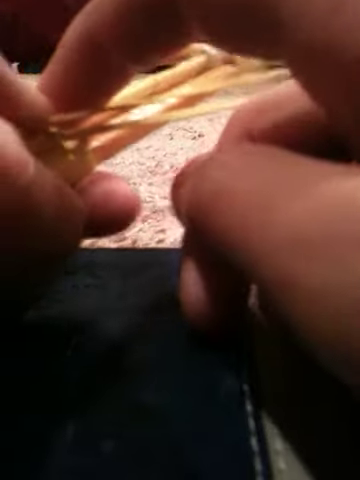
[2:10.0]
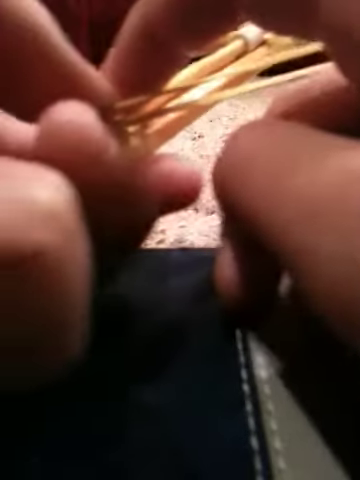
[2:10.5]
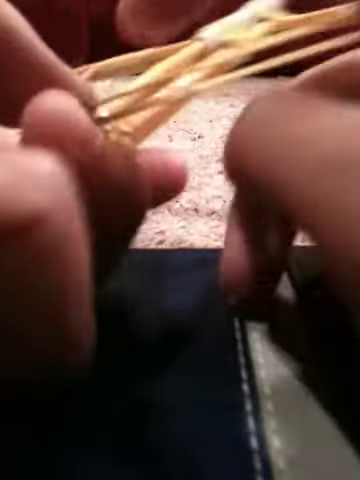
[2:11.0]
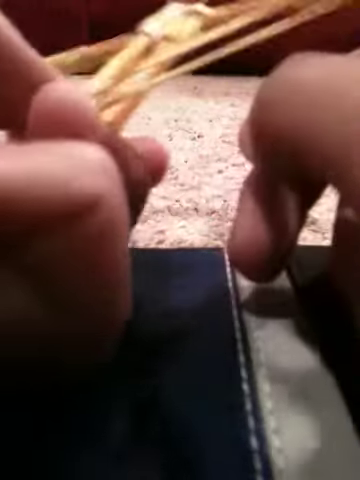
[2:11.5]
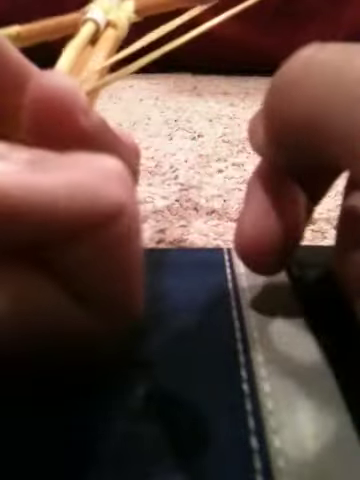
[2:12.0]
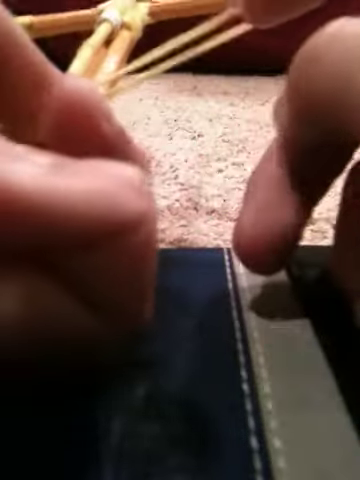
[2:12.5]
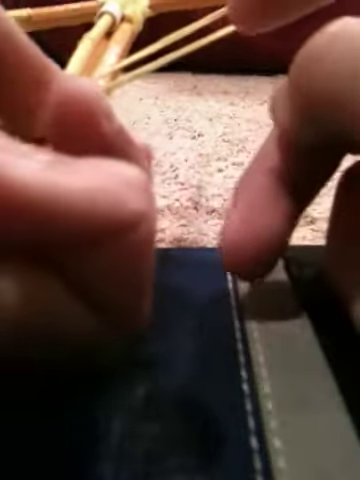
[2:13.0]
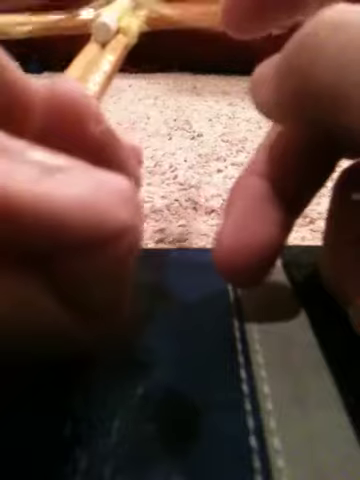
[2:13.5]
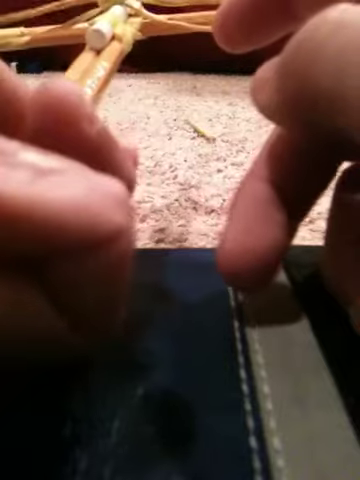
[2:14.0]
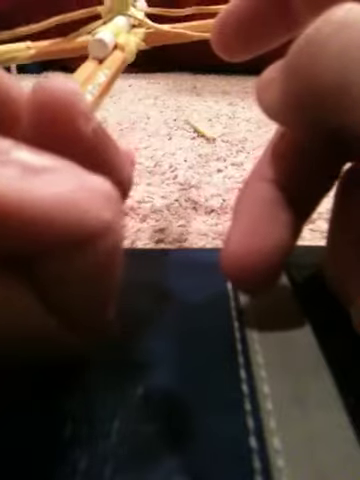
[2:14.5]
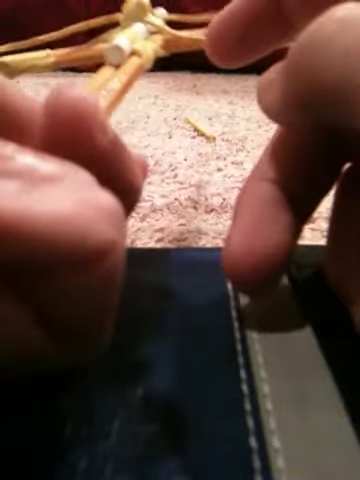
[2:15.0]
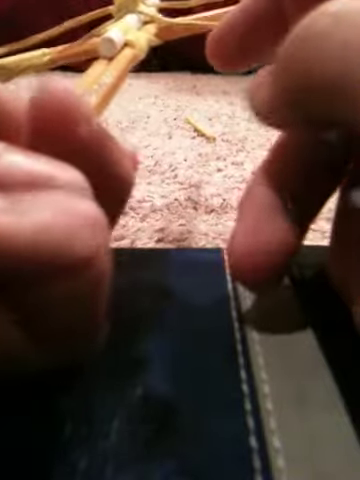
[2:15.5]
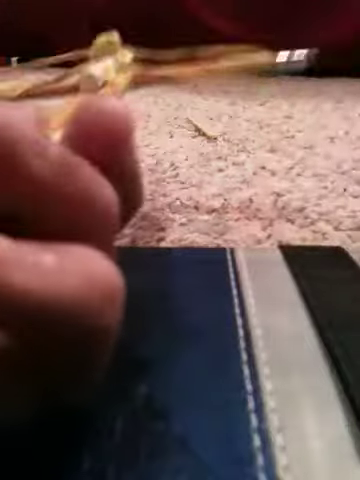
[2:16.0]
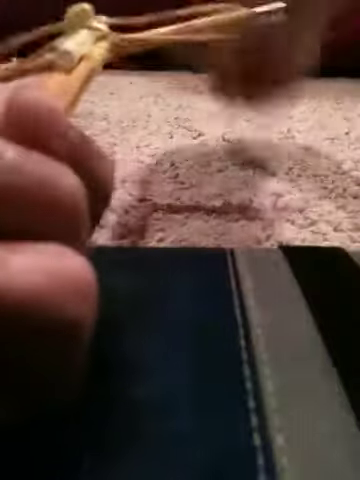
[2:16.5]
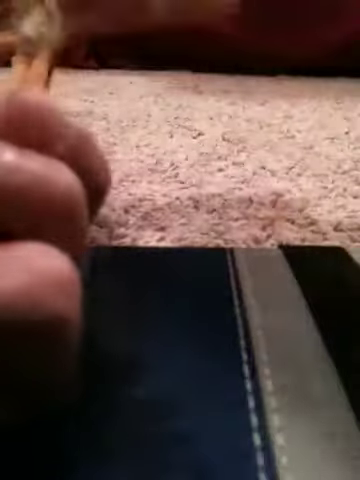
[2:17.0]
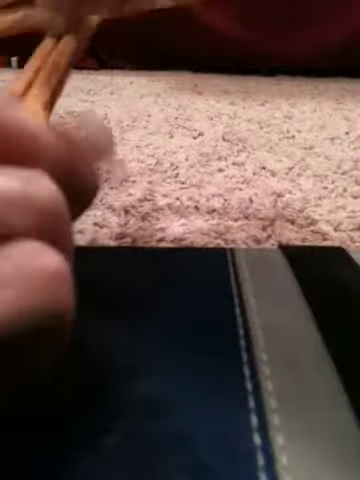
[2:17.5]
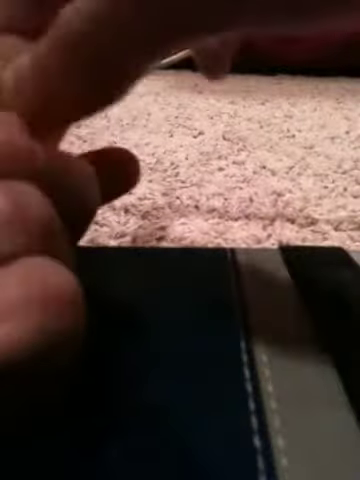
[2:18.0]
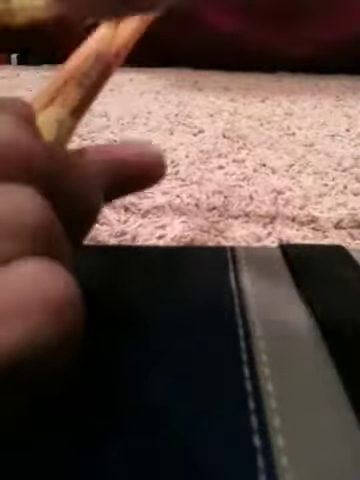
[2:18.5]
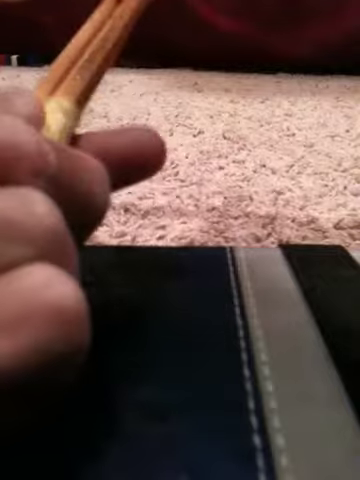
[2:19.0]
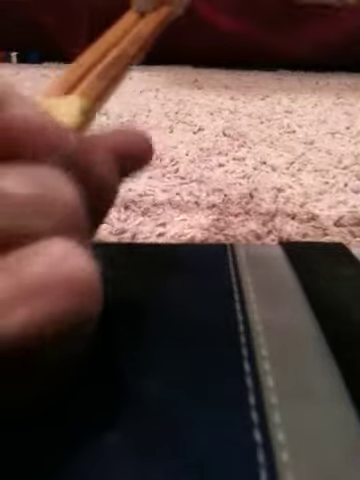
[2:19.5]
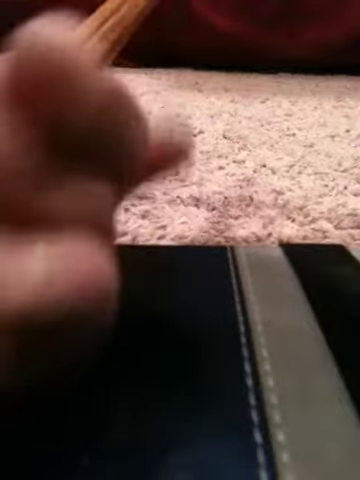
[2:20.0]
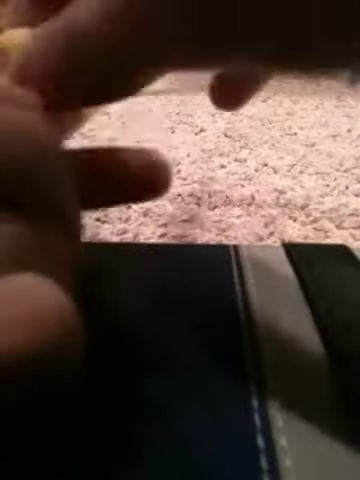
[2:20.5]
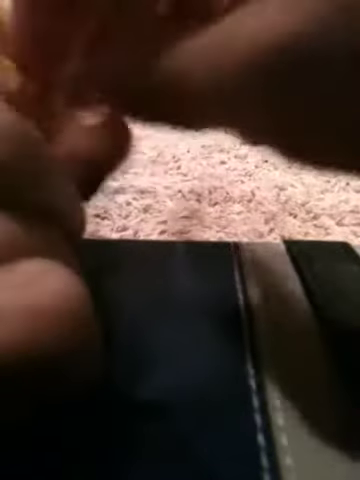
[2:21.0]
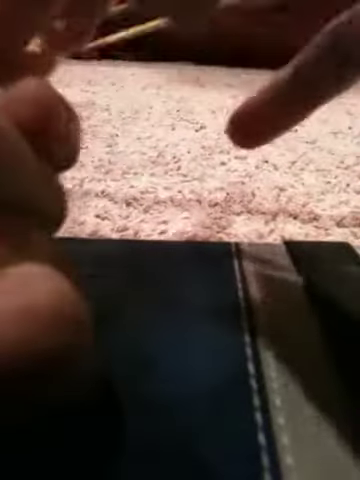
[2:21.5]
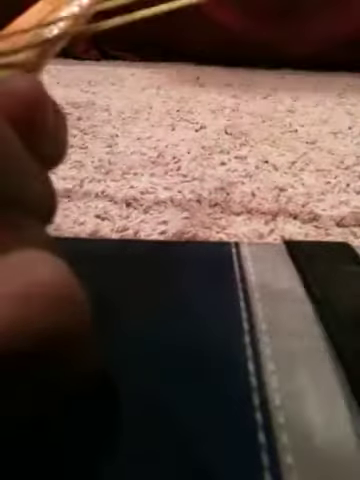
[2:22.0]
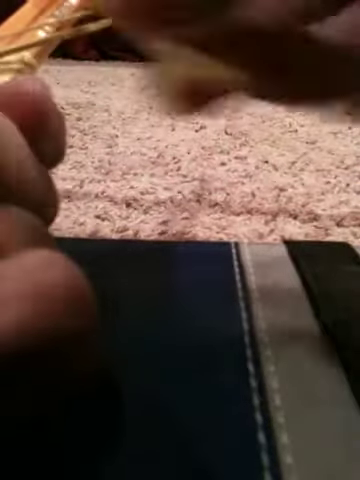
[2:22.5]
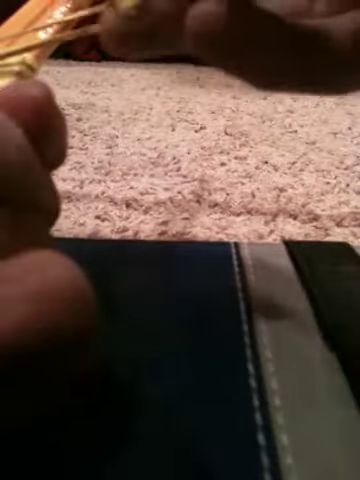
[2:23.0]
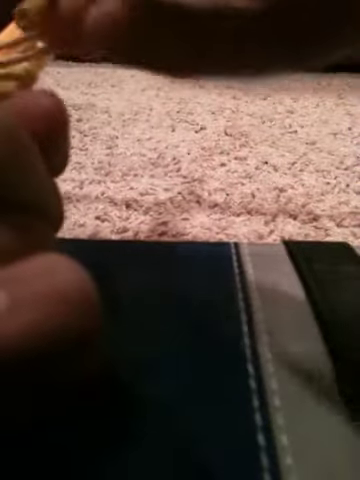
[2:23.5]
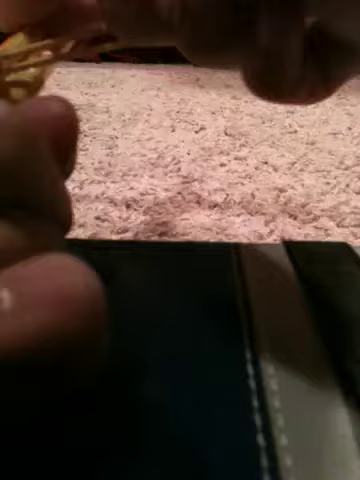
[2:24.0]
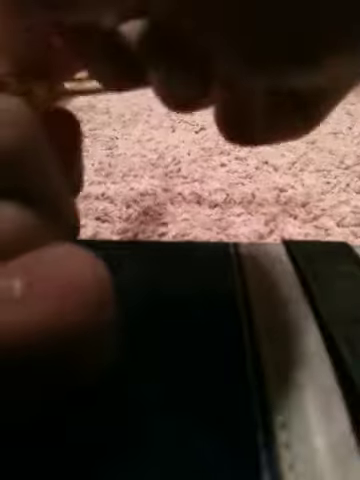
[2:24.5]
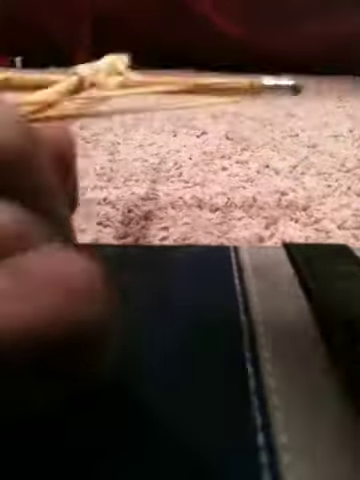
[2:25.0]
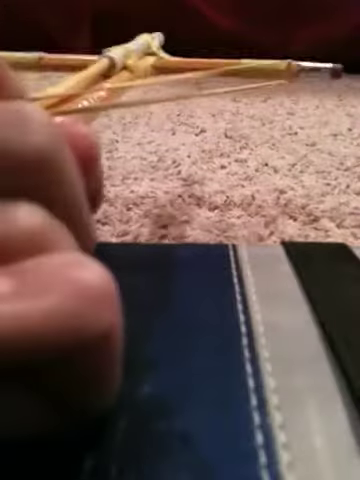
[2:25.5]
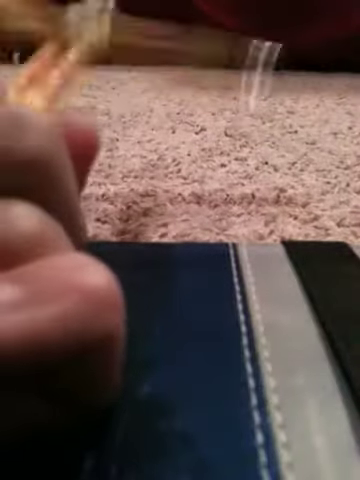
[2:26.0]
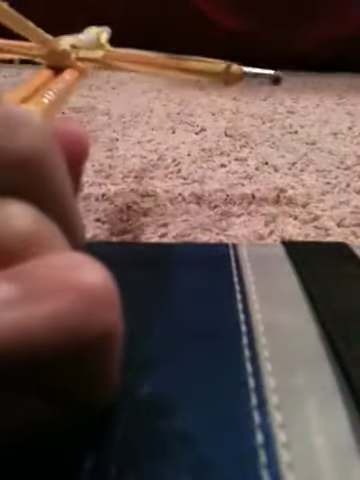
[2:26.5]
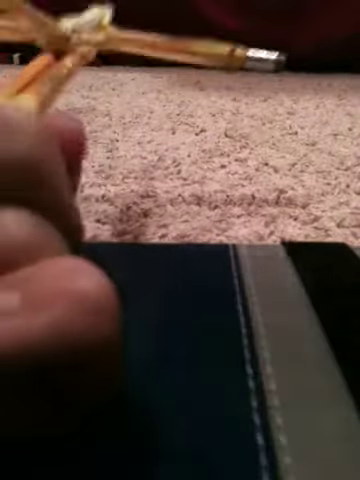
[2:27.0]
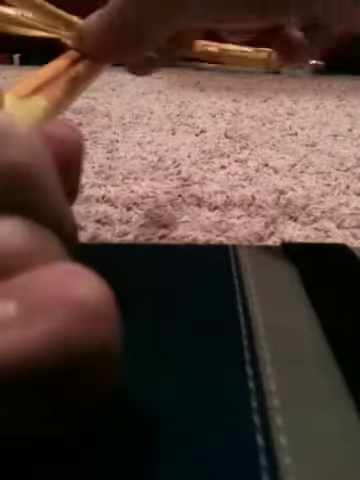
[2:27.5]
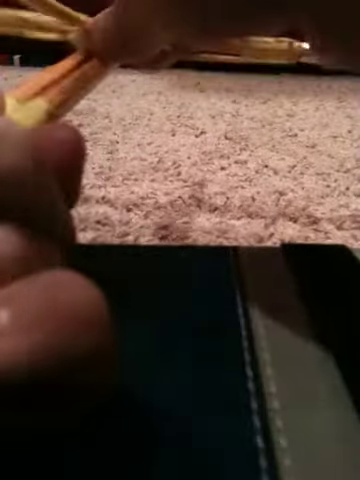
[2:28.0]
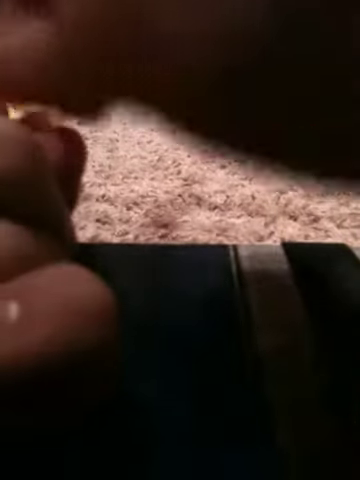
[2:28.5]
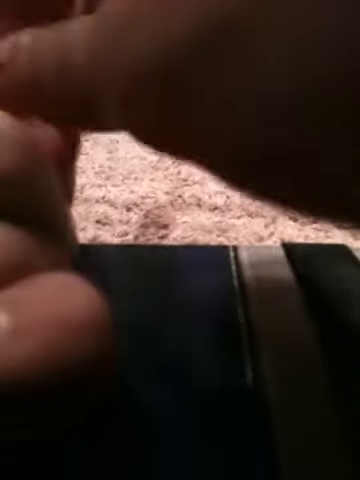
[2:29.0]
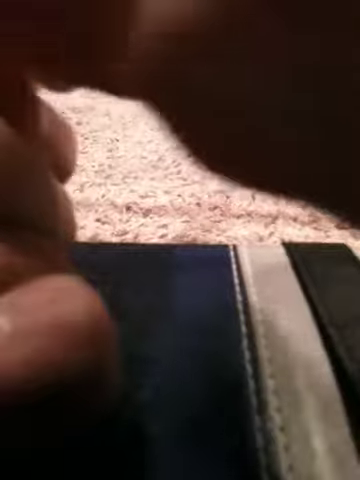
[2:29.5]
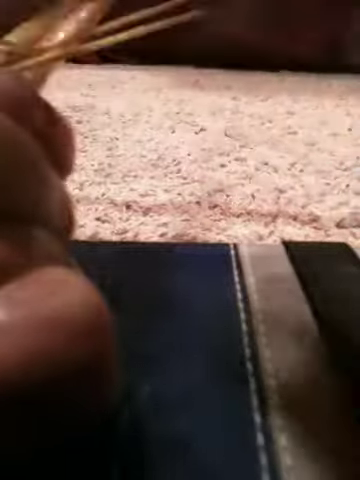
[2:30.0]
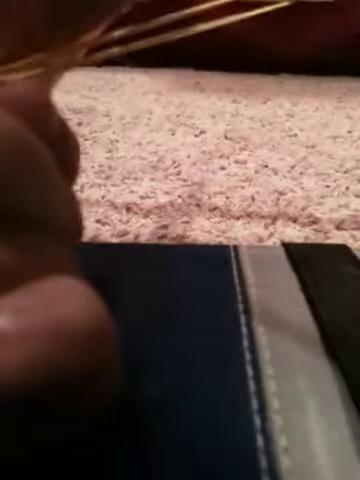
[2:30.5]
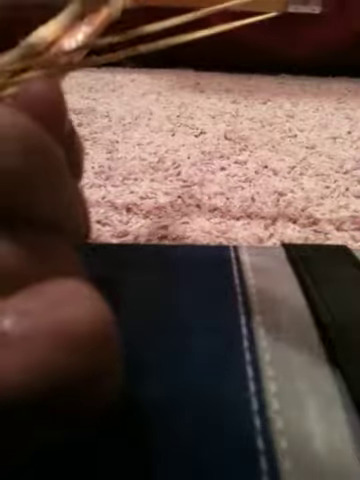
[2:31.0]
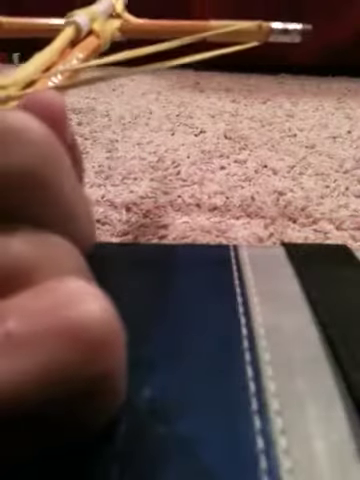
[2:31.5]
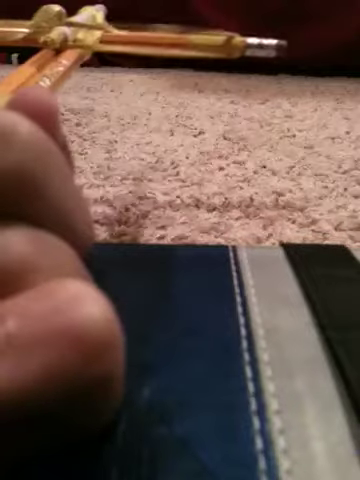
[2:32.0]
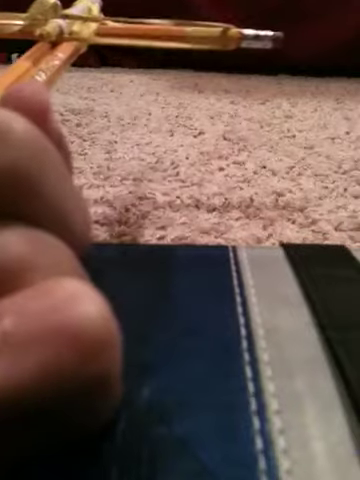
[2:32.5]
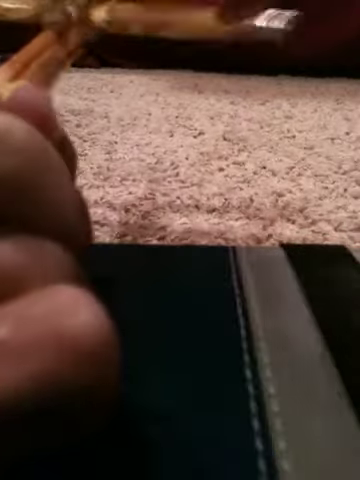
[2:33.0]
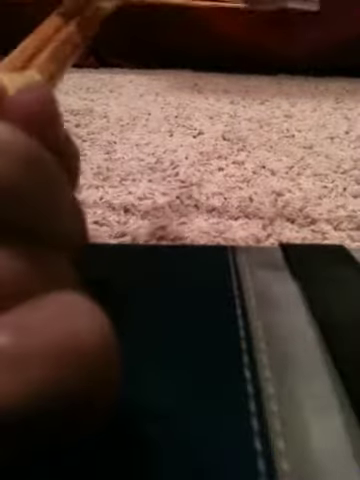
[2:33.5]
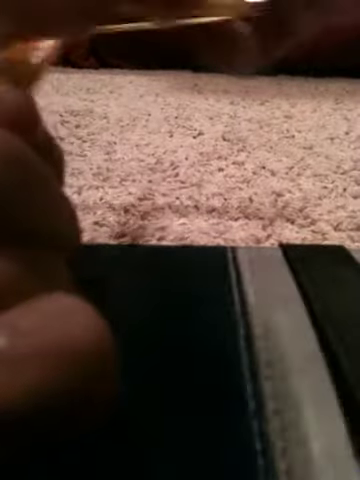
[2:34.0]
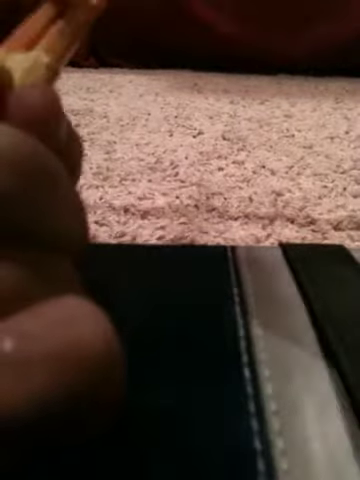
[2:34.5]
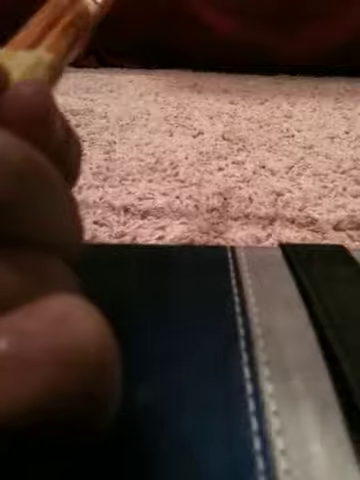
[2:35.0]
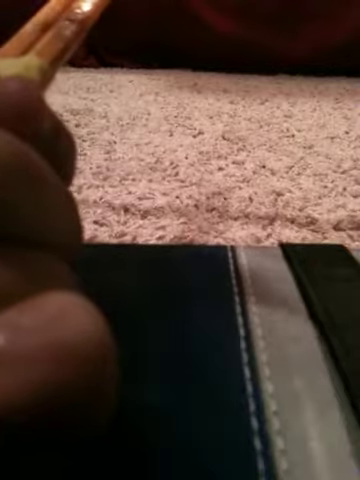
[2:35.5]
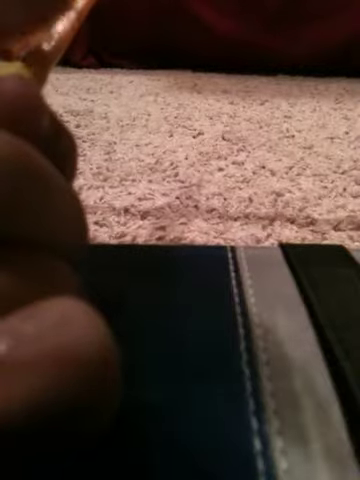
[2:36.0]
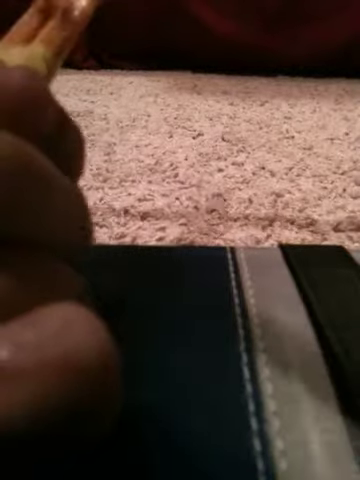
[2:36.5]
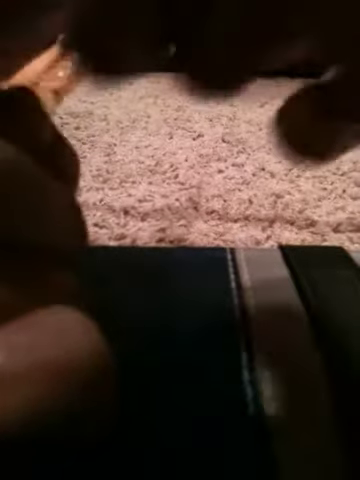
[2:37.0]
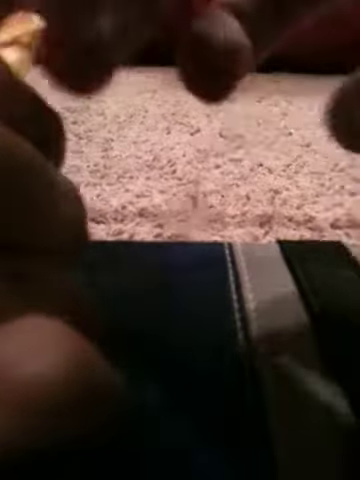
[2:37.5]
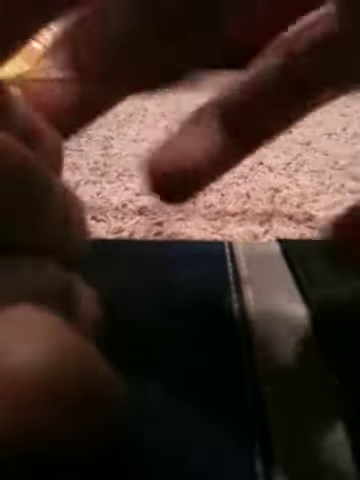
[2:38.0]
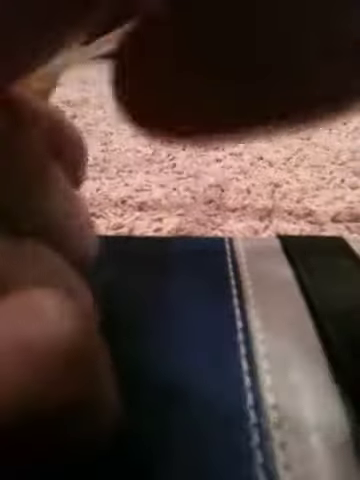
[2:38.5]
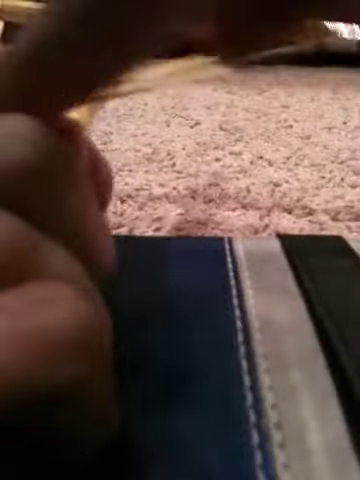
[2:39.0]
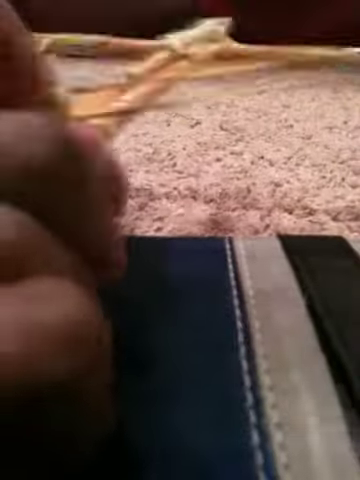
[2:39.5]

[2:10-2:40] The pencil crossbow has a crossbow bolt loaded into its loading port. The whole device is held in the left hand of a Caucasian male, whose left thumb holds the elastic band taut on the back end of the bolt. In the foreground is a black box with a grey stripe, the midground is a light brown shaggy carpet, and the background is black and hard to see. The left thumb releases the elastic band and the device launches the bolt forward. The right hand picks up the bolt from the ground and, after some struggling, loads it back into the device held in the left hand, and the left hand releases the elastic, launching the bolt forward.